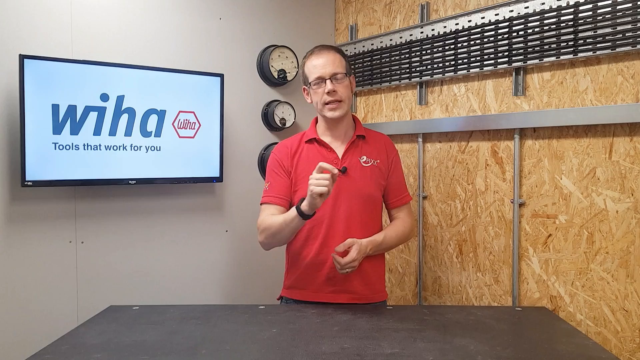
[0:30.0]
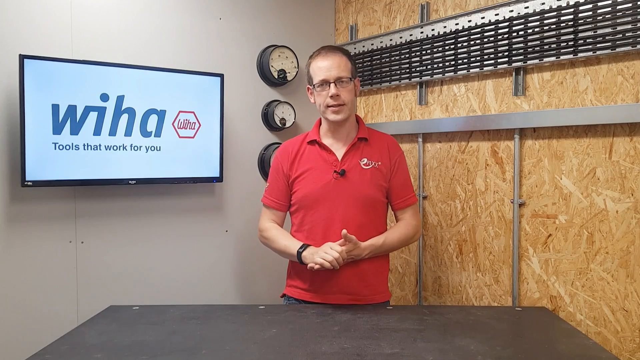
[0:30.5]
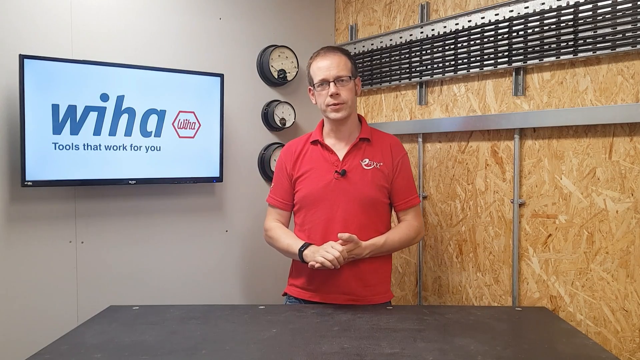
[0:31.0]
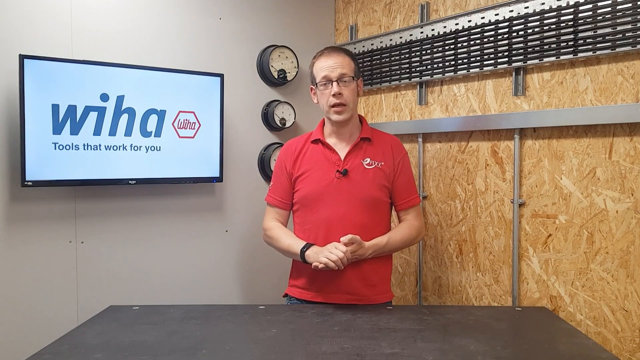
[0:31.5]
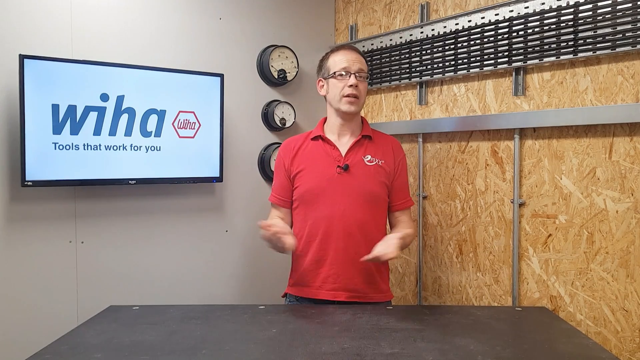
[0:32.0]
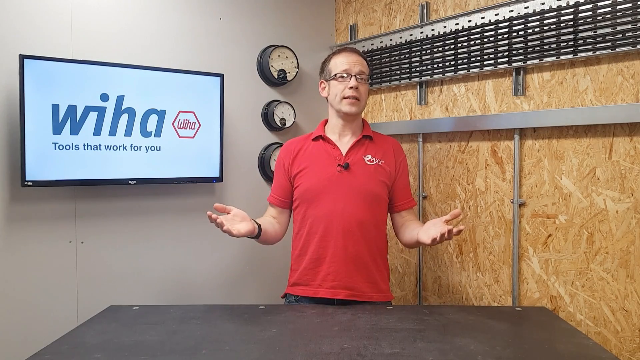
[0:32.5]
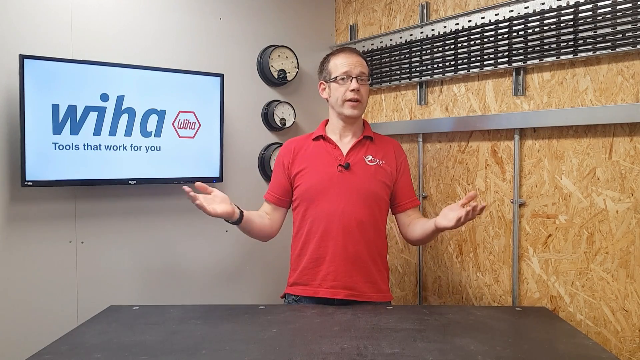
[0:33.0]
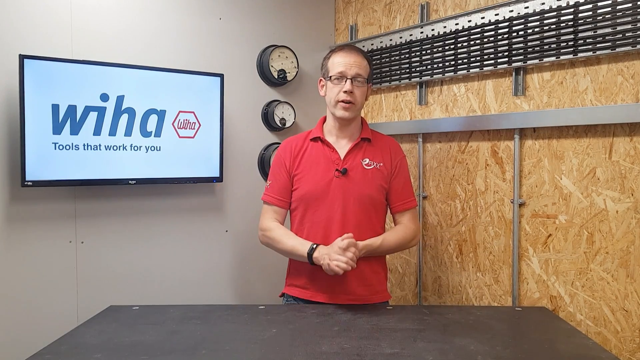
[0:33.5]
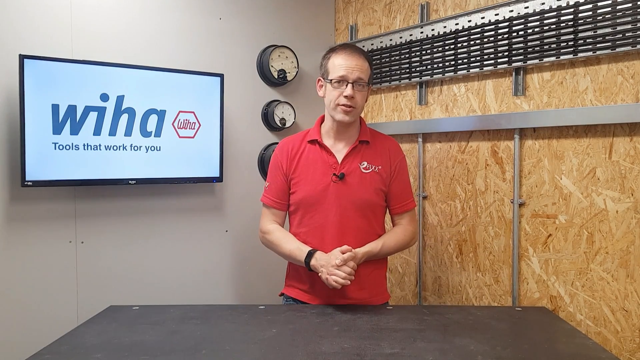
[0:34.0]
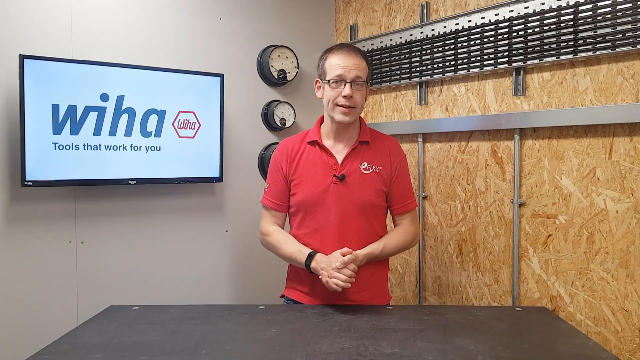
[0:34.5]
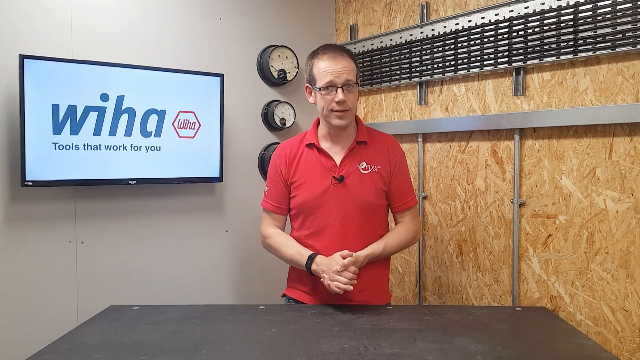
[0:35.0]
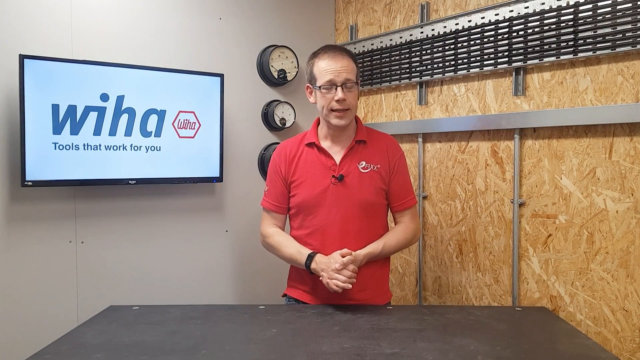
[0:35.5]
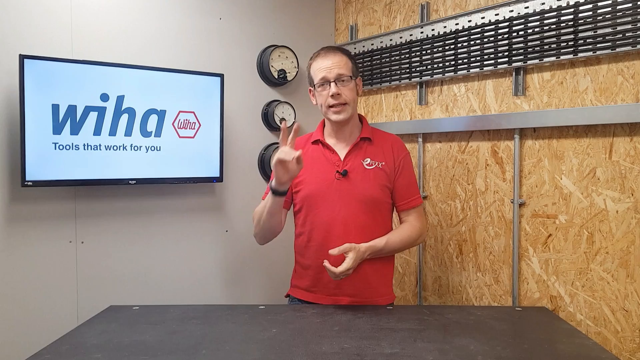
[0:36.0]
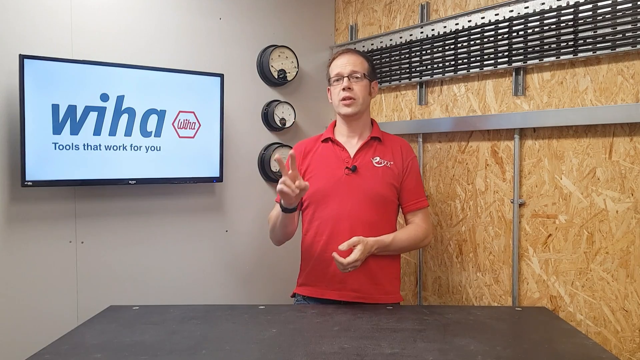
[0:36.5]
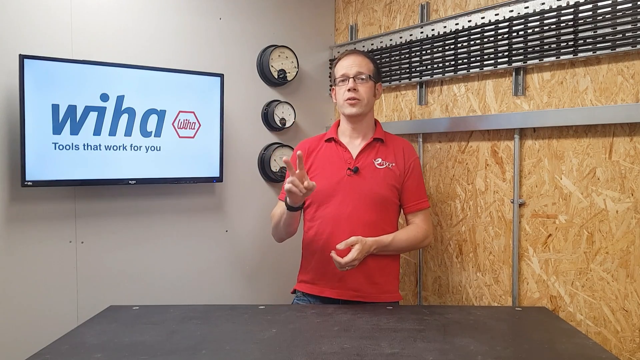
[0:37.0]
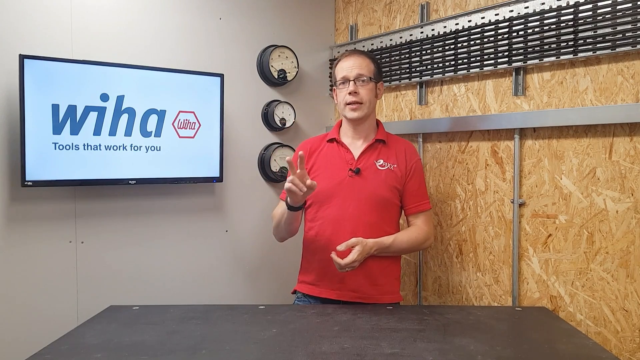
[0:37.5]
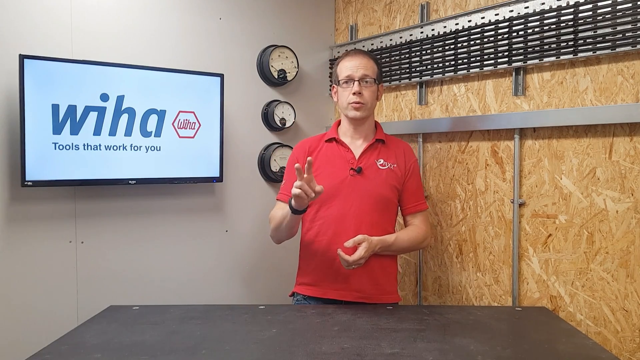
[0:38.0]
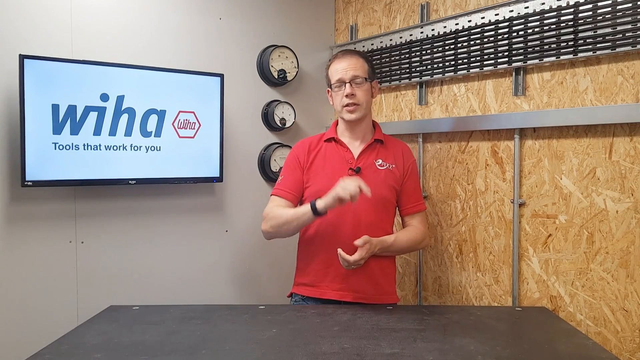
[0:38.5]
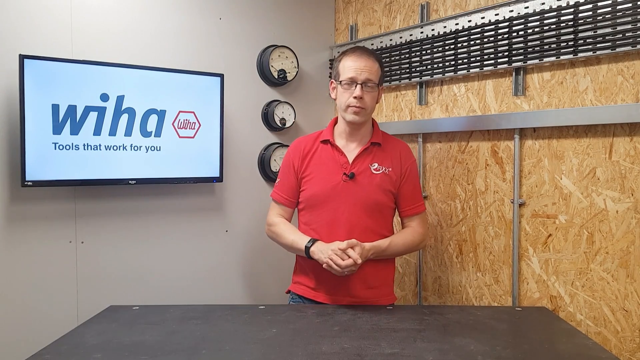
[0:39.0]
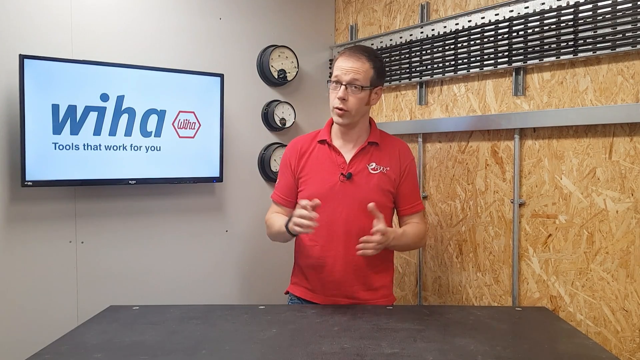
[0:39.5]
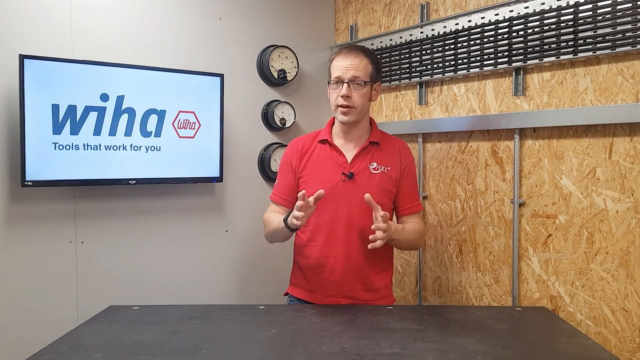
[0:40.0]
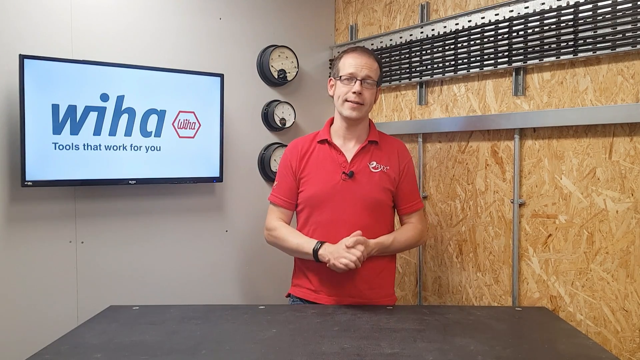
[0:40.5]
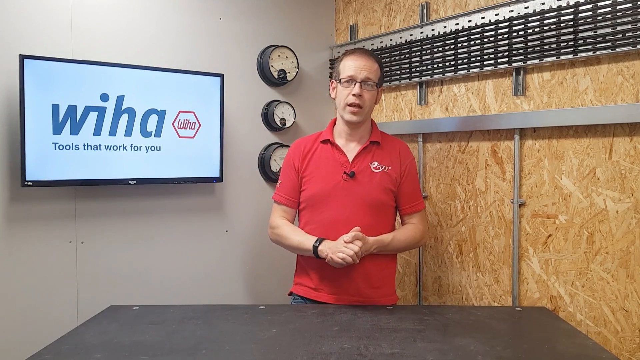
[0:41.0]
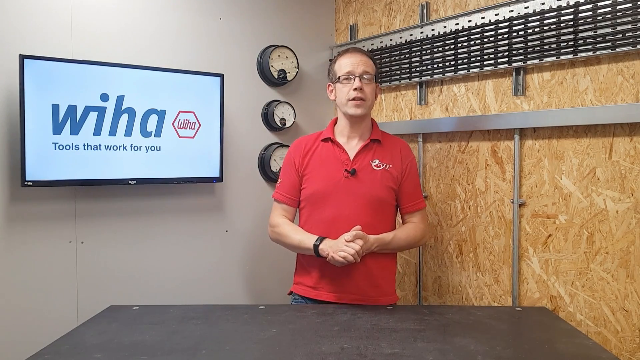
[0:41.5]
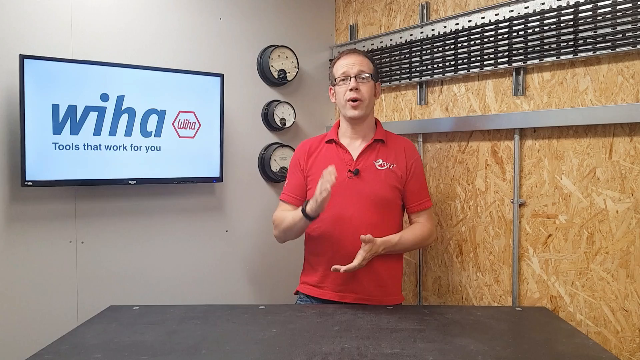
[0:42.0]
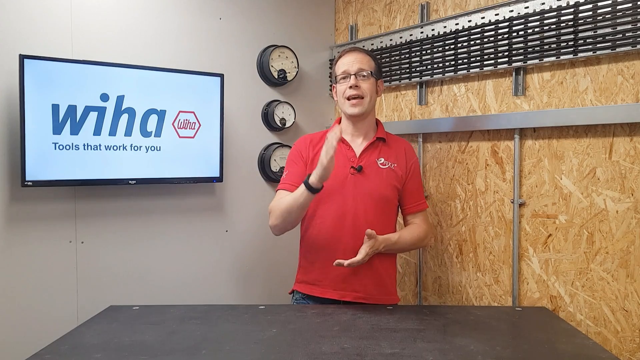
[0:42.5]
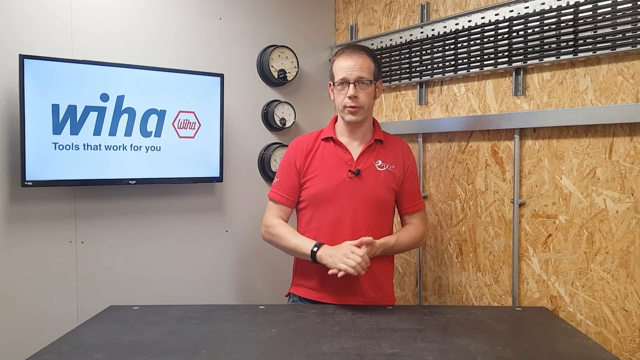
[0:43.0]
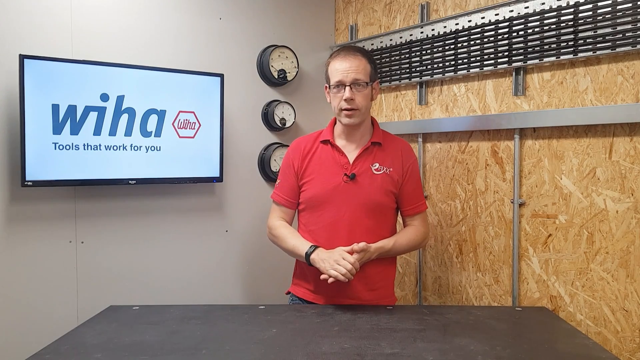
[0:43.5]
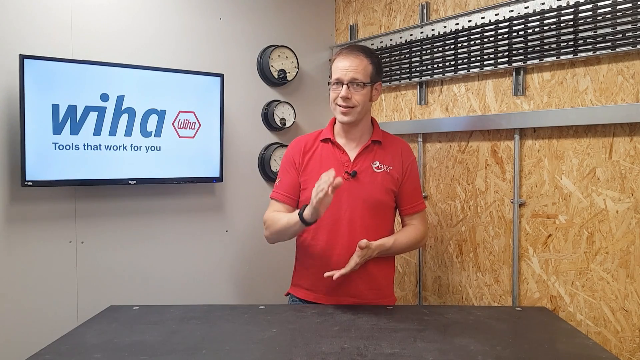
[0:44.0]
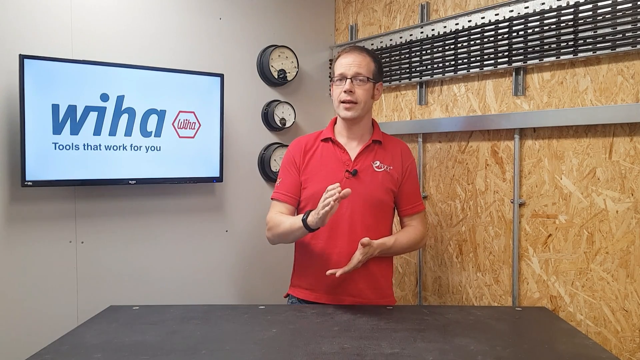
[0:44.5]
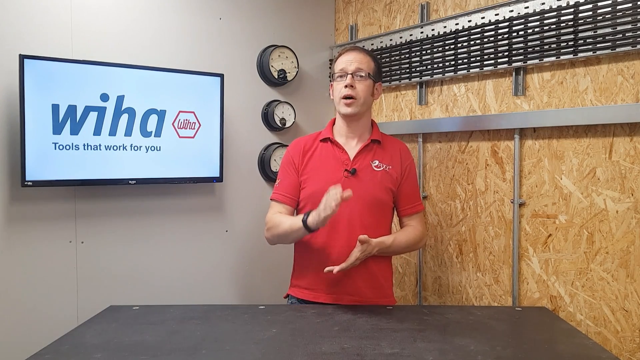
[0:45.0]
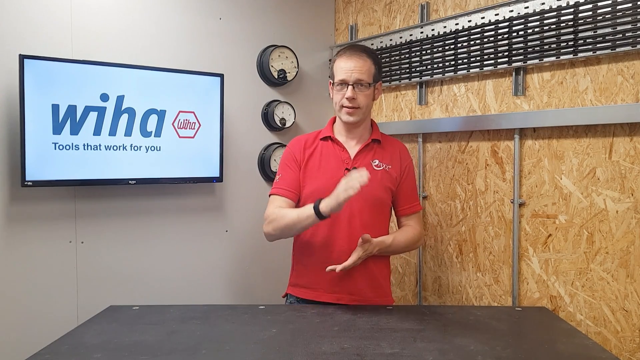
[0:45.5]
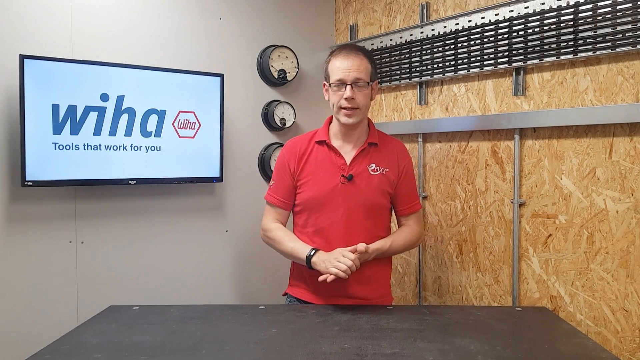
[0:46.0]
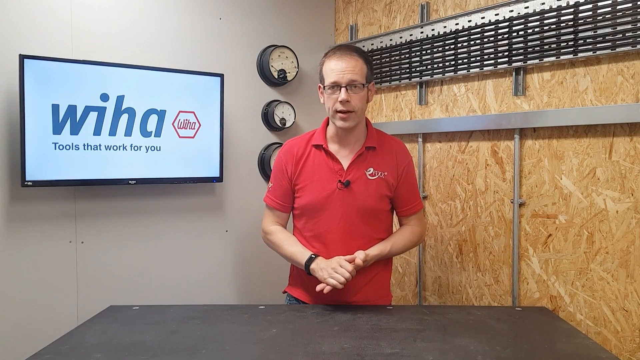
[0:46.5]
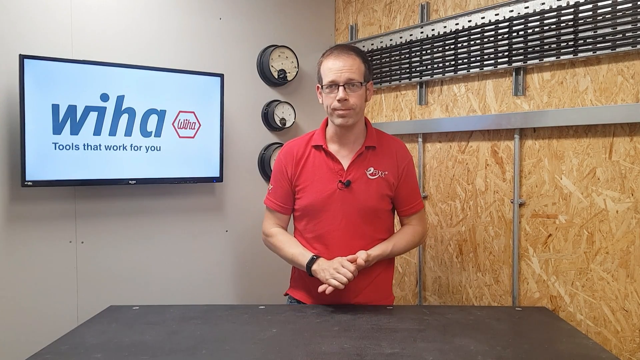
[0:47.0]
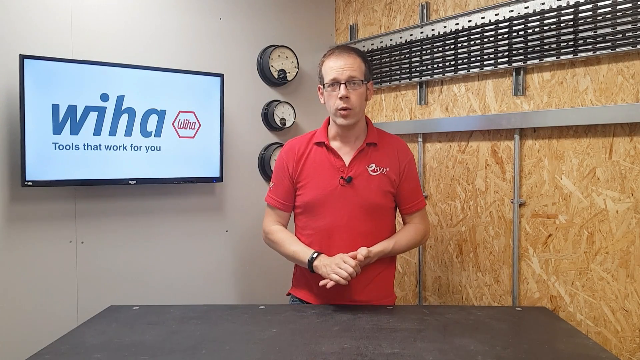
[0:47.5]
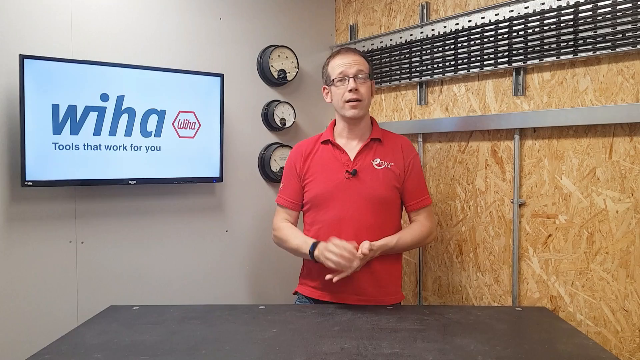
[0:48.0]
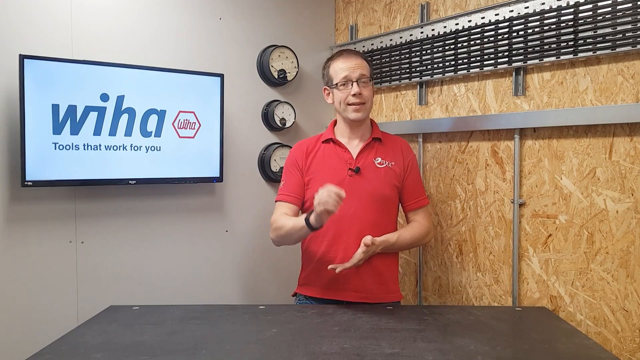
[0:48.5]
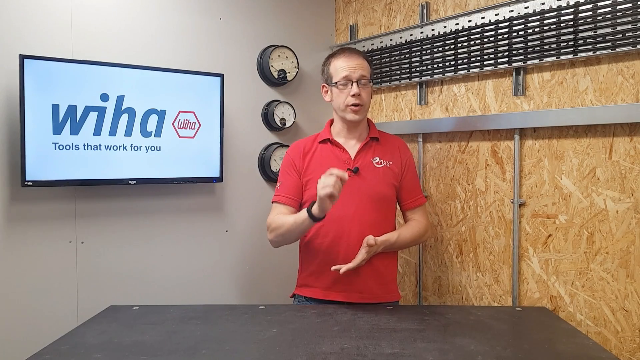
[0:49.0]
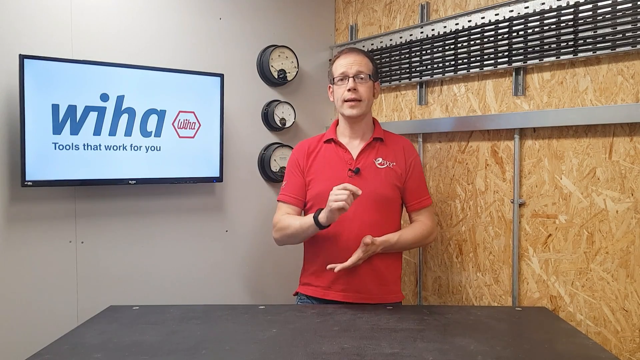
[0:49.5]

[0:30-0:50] The same man in the red t-shirt appears to be giving a product demonstration for a company called WIHA. He uses his hands expressively, at one point holding up a two-finger sign with his right hand. Behind him on the wall are three objects that look like wall clocks, though they might be pressure gauges or some other devices. On the right-hand side there is fresh-cut wood with some kind of holding racks along the wall. No actual product is shown; the man stands in the center of the screen, looking straight at the camera. A computer screen shows the company logo "WIHA" with the slogan "tools that work for you" right below it.